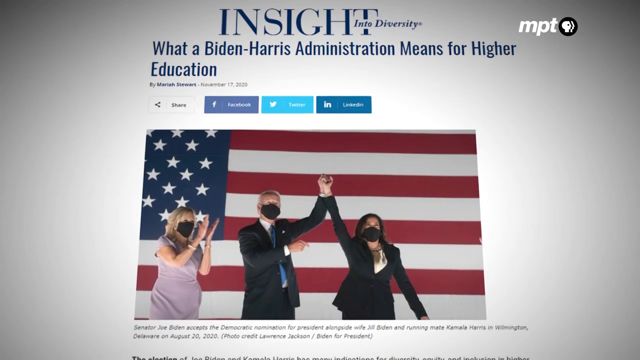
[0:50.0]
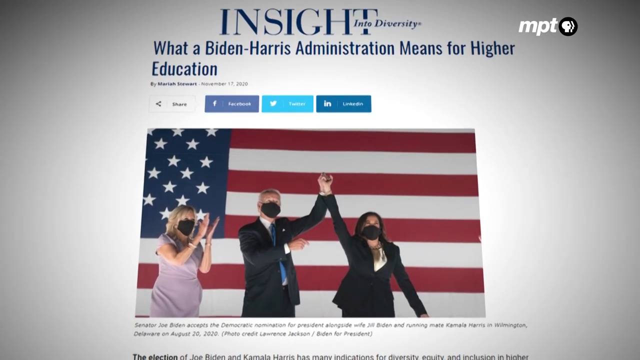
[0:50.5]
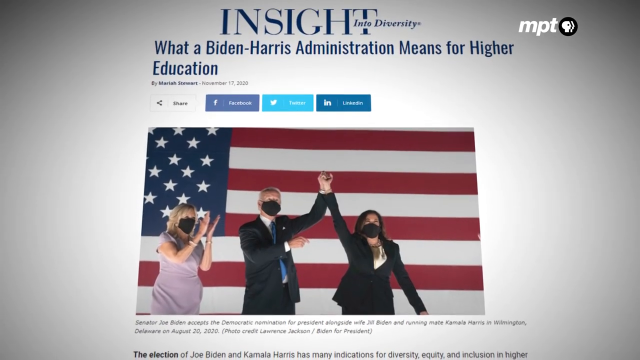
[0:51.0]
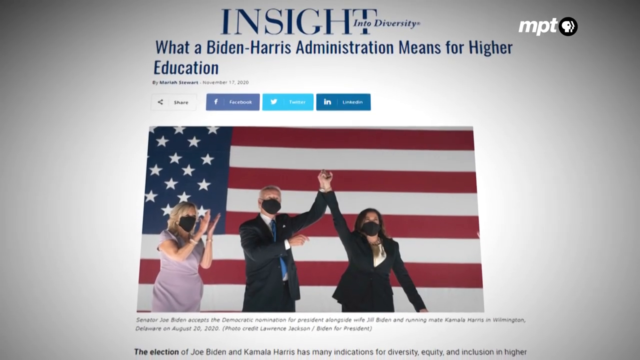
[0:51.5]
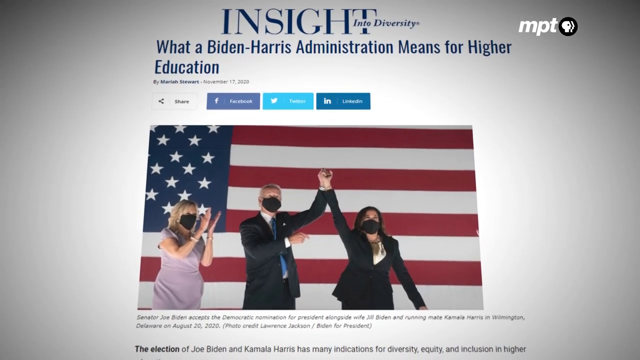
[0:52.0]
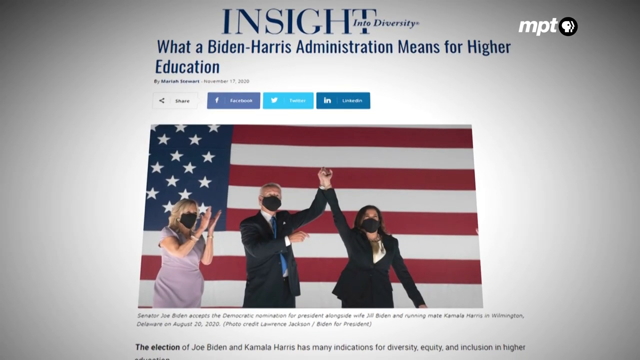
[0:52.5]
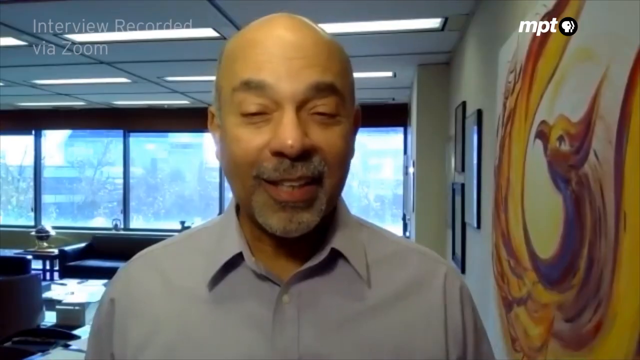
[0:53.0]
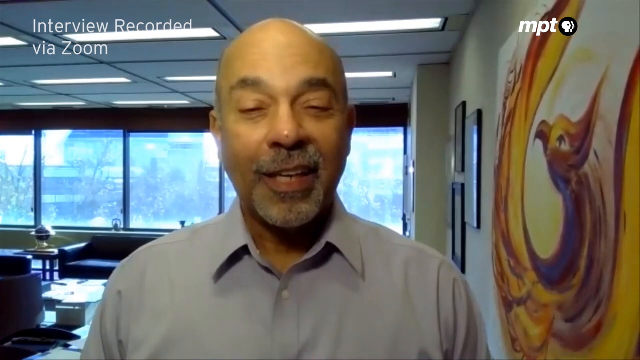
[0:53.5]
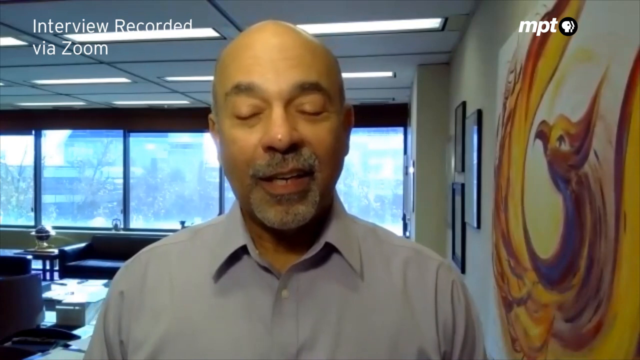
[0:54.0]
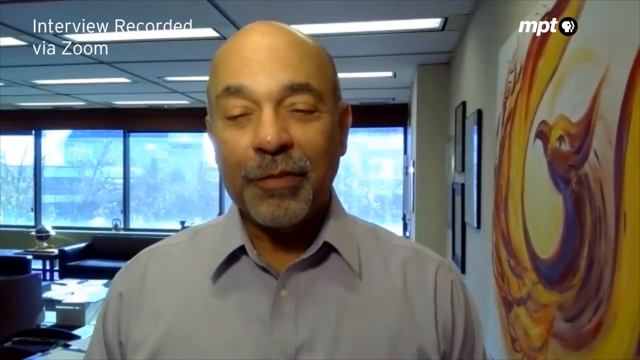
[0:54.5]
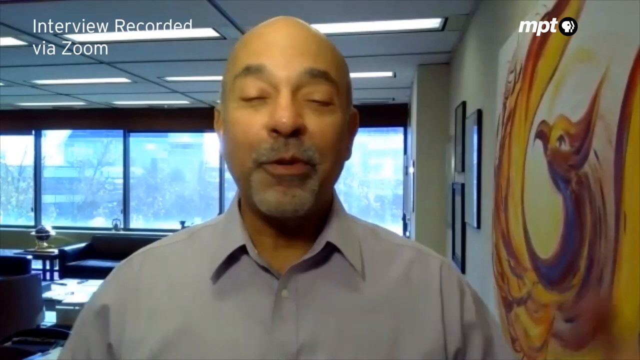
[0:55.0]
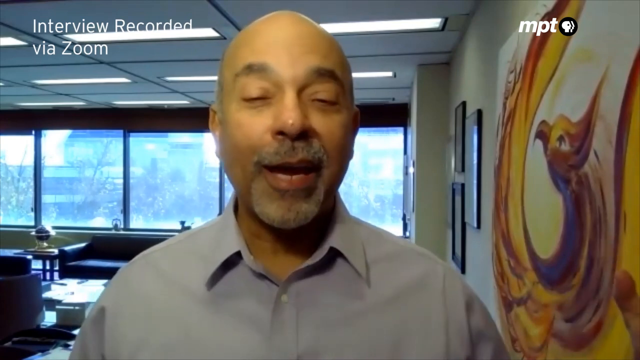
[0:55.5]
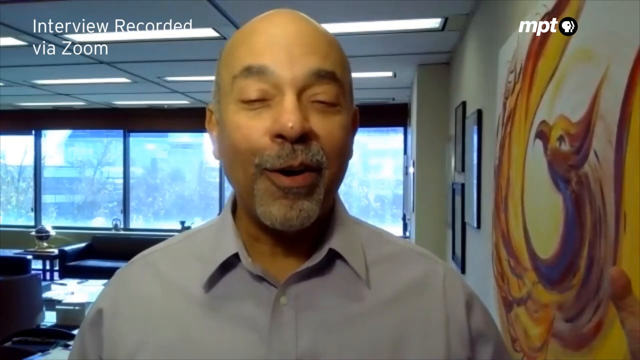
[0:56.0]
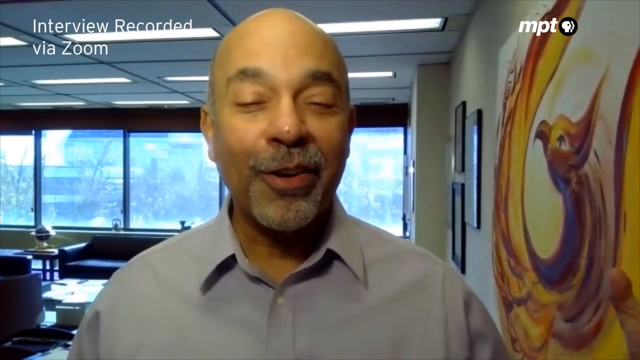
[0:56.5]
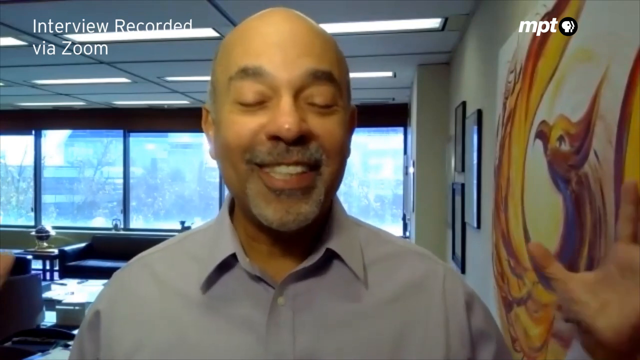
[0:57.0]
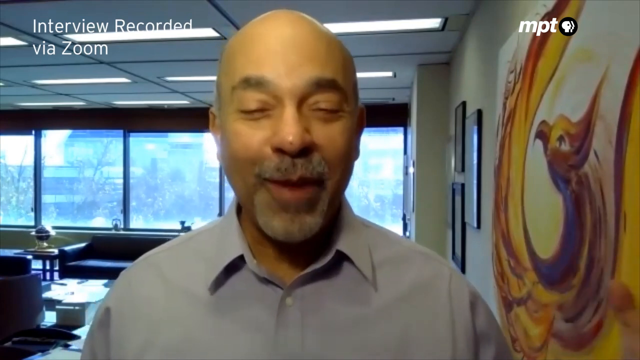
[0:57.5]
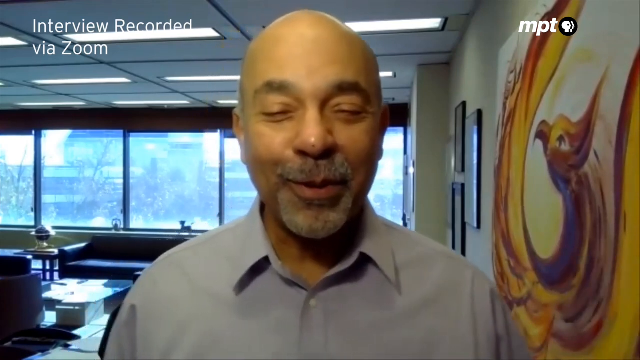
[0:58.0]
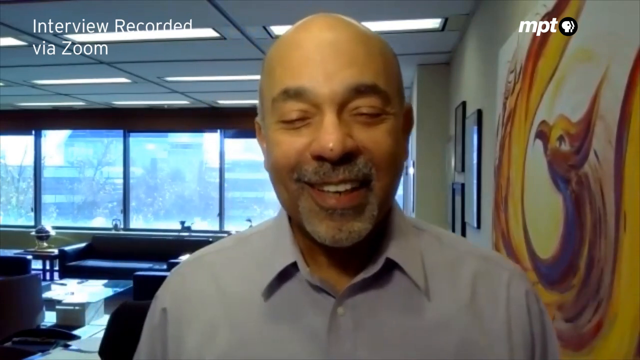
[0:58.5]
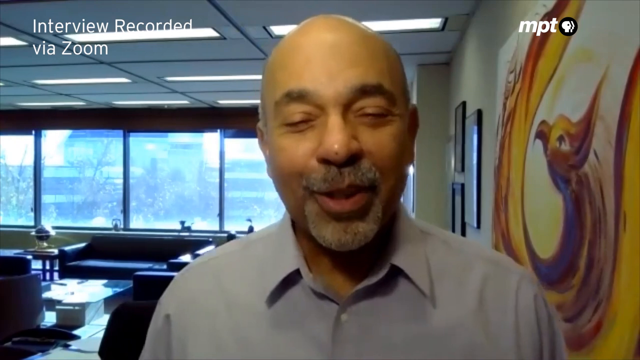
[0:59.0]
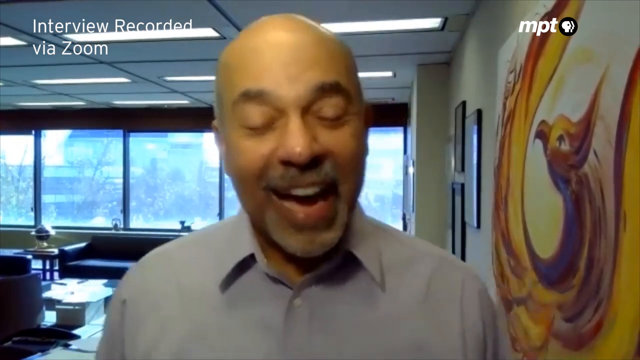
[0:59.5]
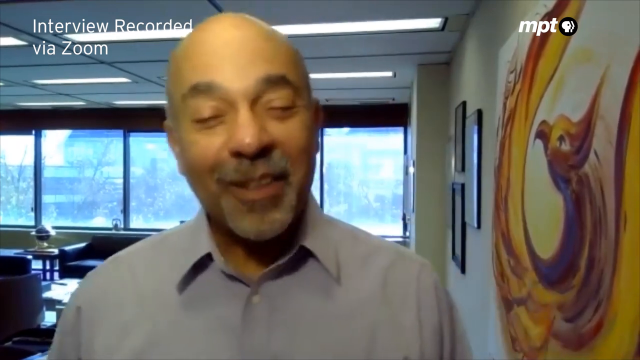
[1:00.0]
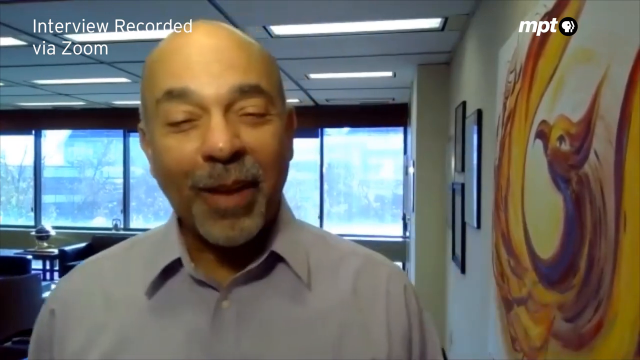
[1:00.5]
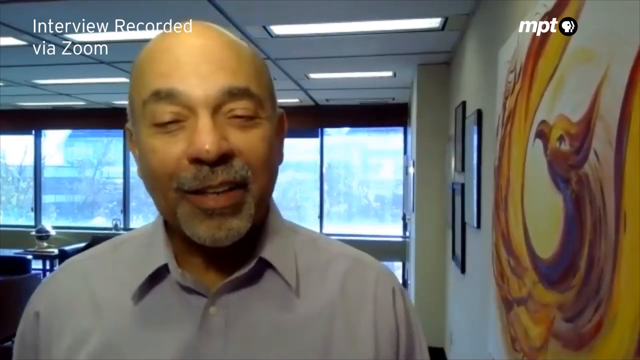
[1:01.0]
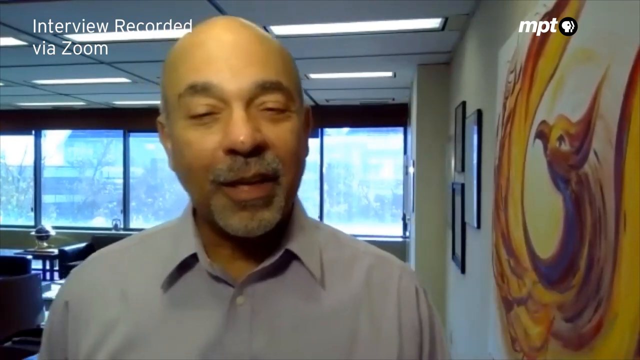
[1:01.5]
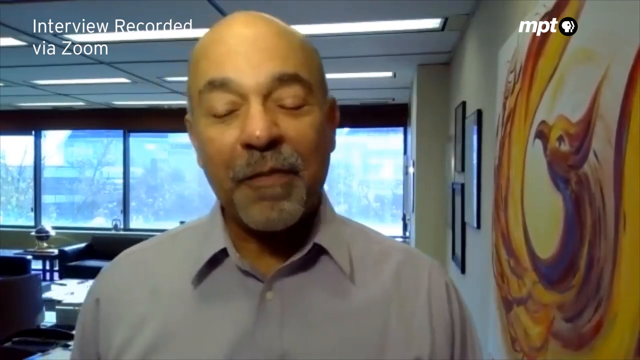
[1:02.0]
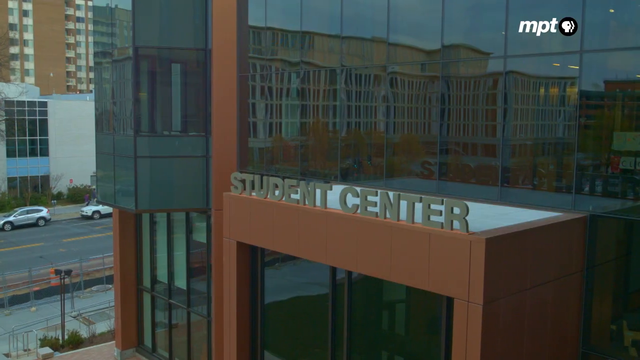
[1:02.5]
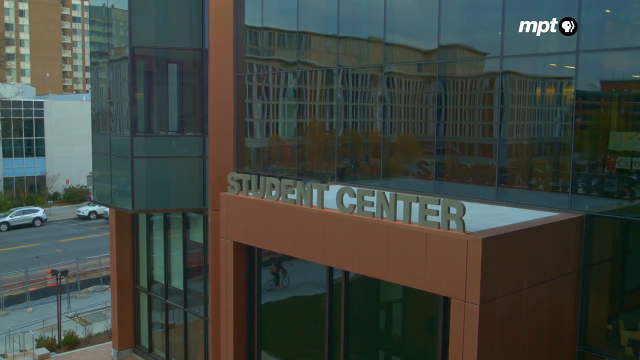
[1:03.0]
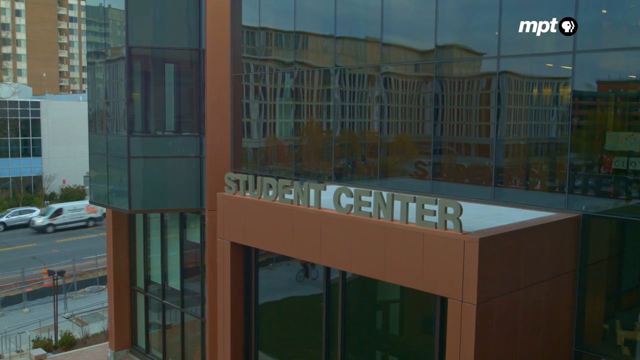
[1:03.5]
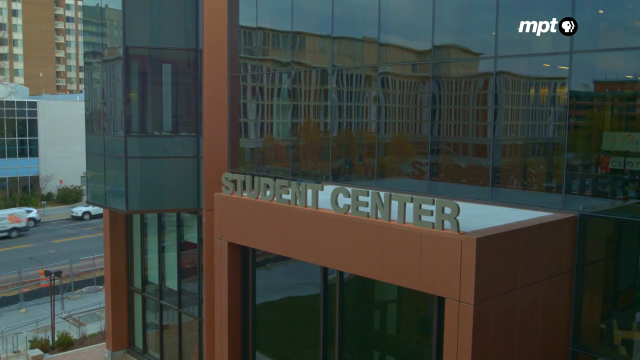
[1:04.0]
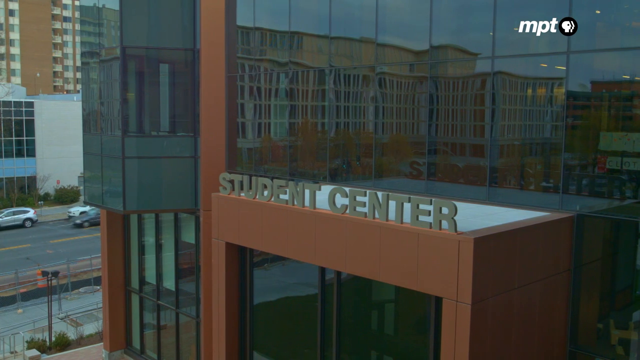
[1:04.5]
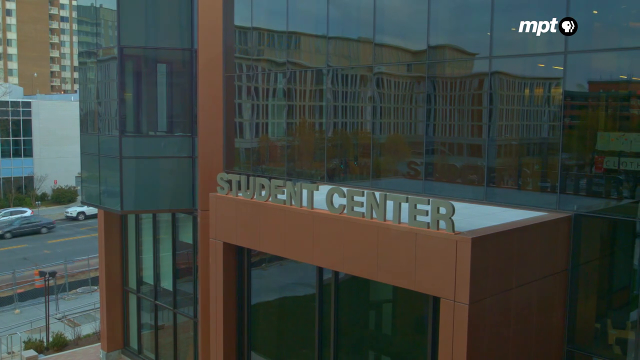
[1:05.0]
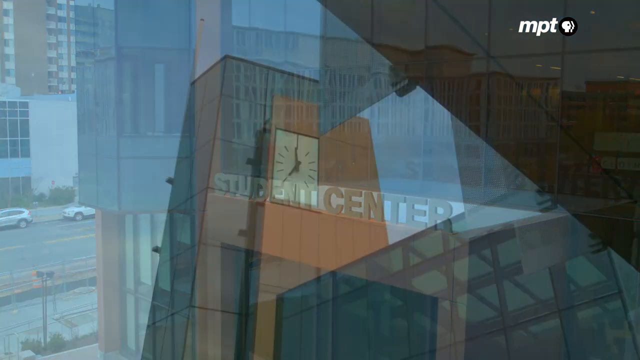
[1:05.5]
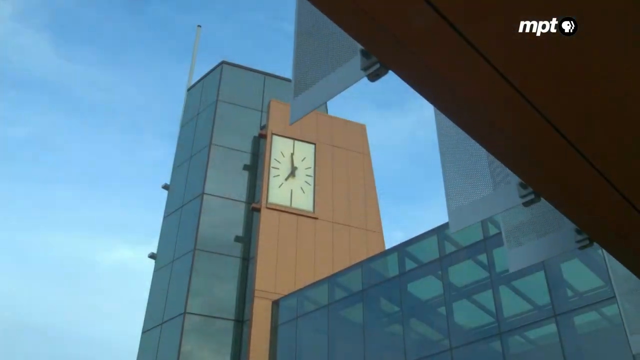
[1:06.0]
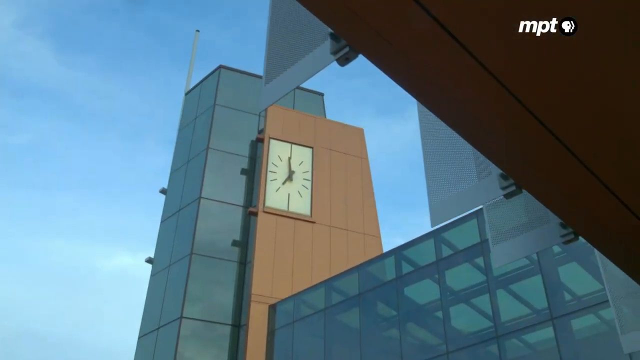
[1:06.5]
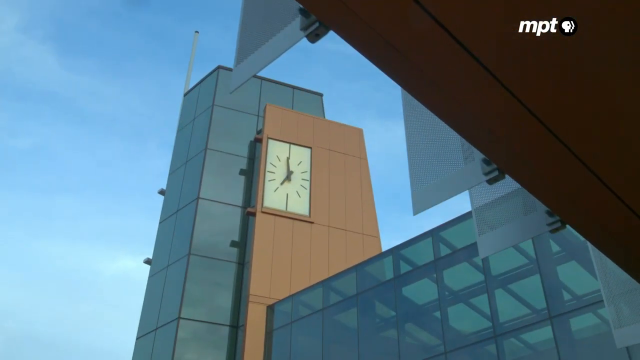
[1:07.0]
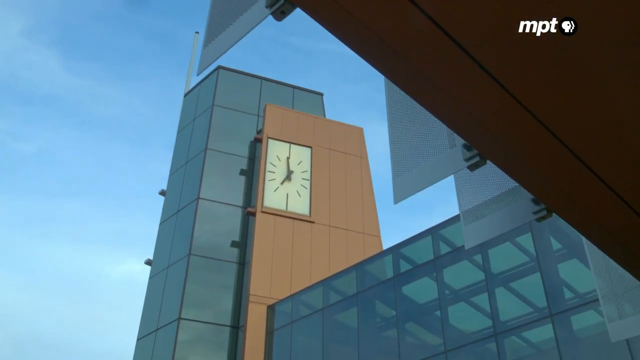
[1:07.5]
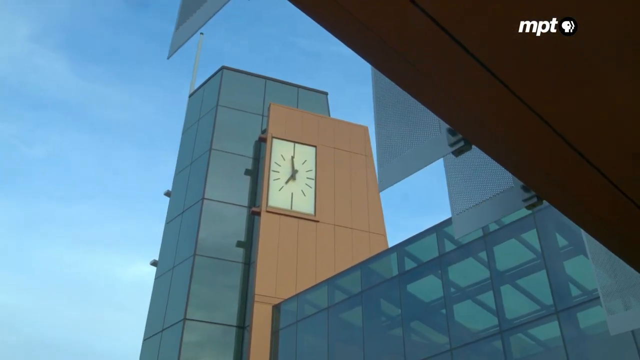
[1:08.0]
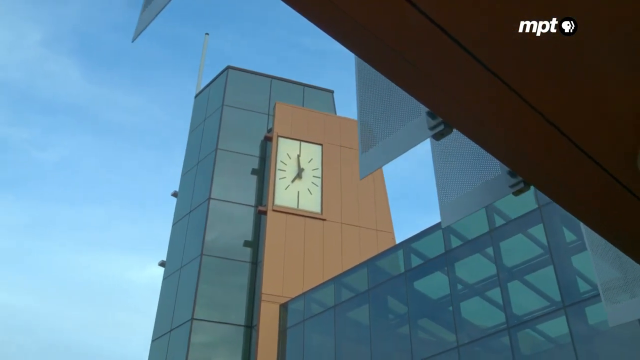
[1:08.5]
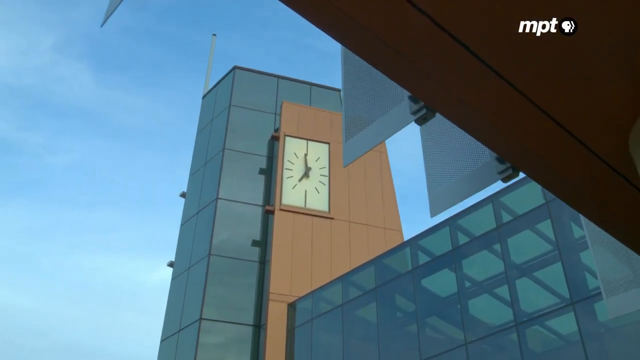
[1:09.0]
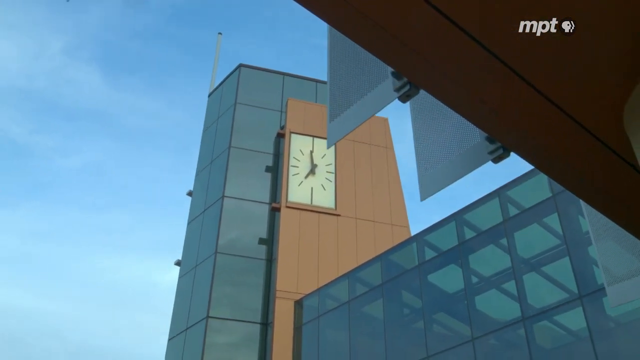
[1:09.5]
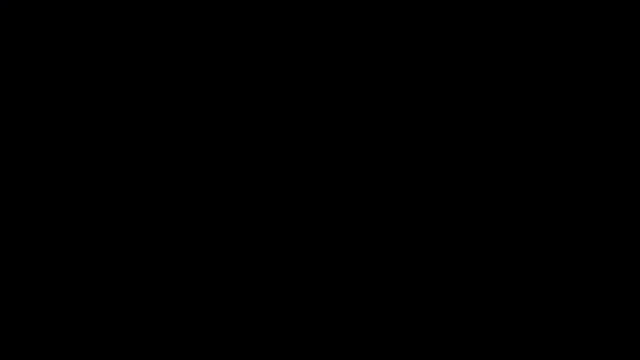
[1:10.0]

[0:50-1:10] A picture shows two candidates, a male and a female wearing masks, lifting their hands up, while another person, seemingly a parent, claps their hands and also wears a mask. A US flag is at the back. The screen zooms out and Dr. Ronald comes back on screen, talking, smiling, closing his eyes and nodding his head as he speaks. Next comes the student center, with cars moving and a big clock. The camera moves, showing the campus, which has a lot of glass around it; the reflection of another building is visible in the student center's glass.